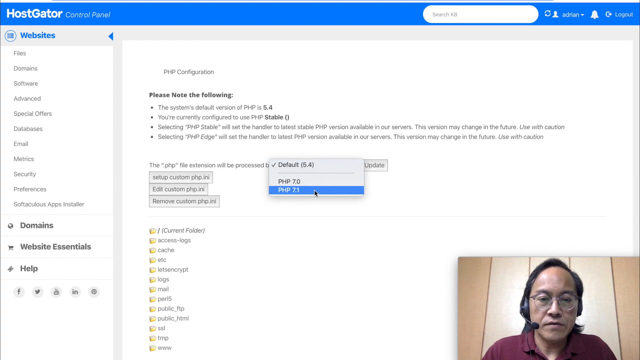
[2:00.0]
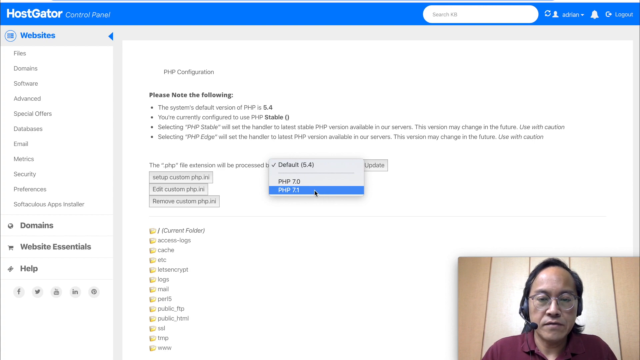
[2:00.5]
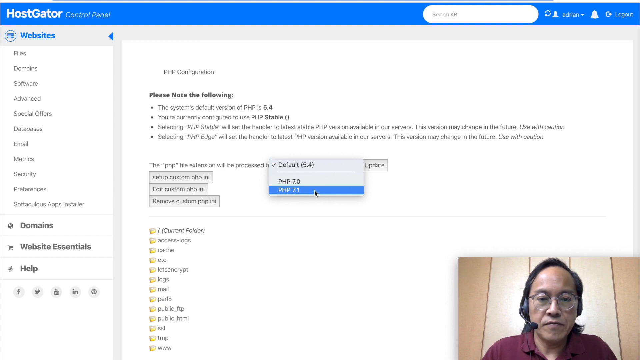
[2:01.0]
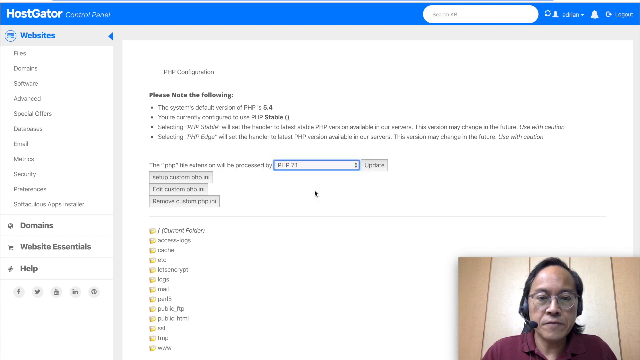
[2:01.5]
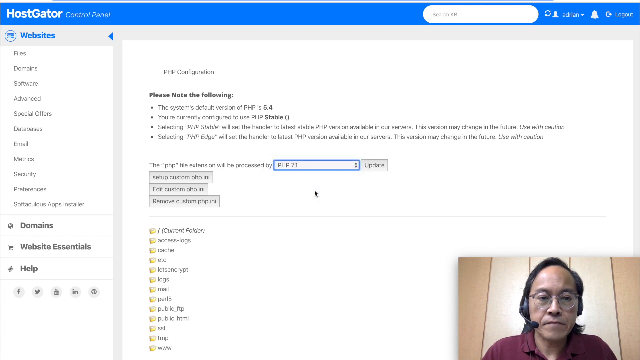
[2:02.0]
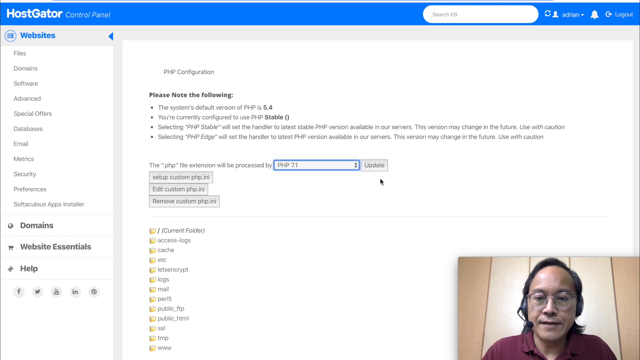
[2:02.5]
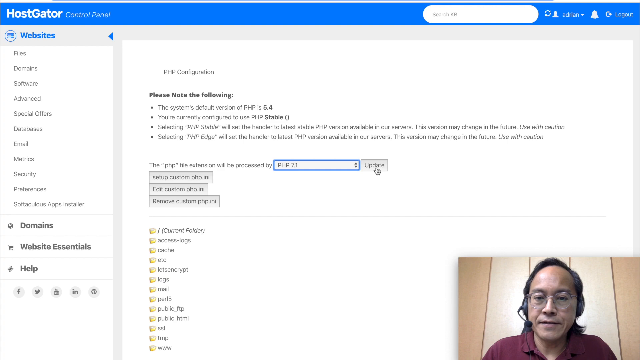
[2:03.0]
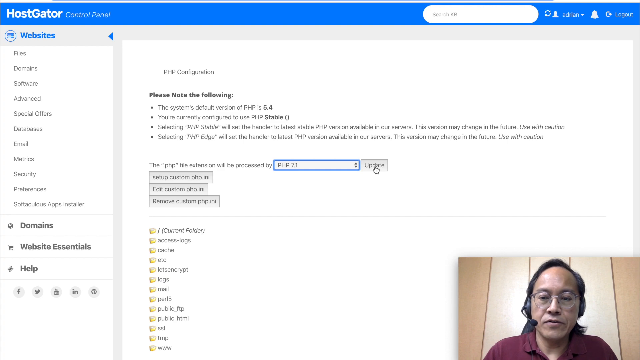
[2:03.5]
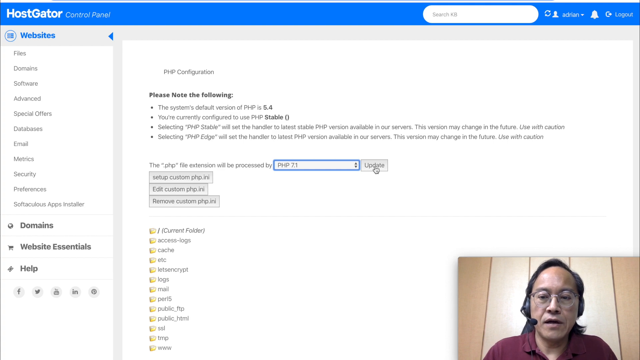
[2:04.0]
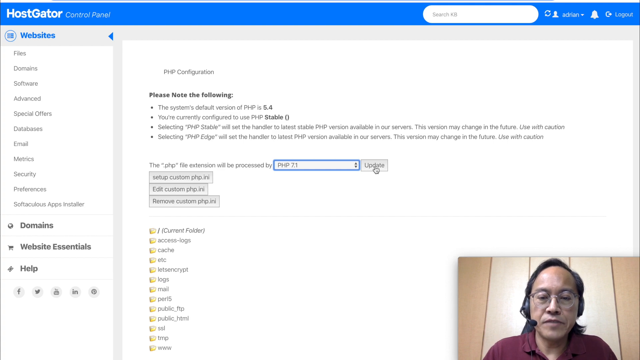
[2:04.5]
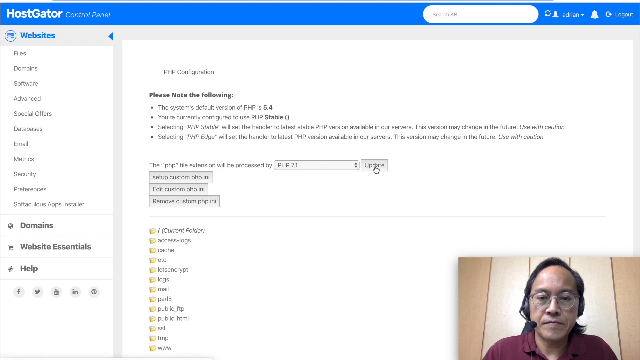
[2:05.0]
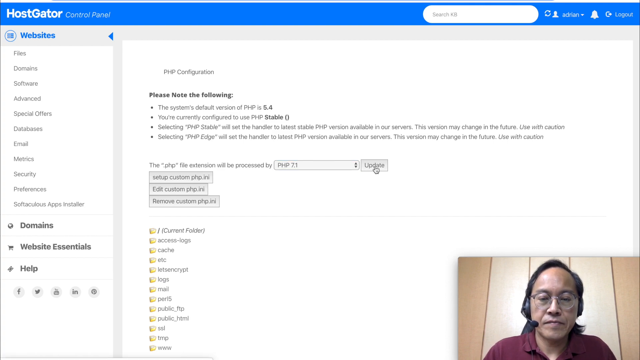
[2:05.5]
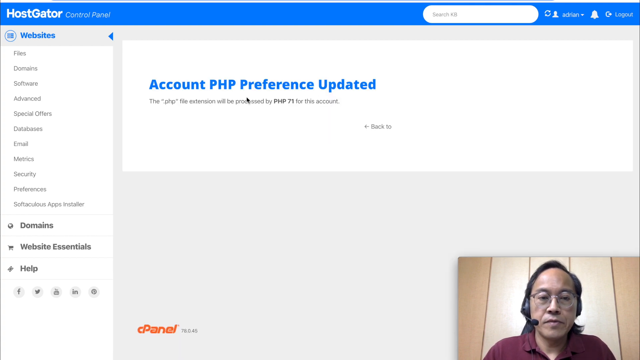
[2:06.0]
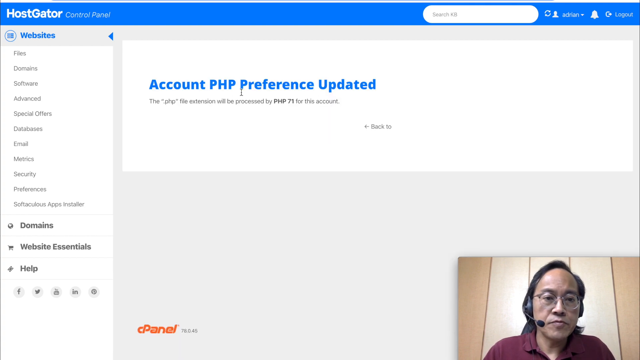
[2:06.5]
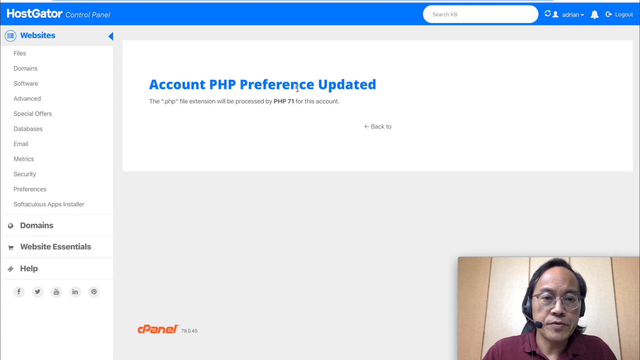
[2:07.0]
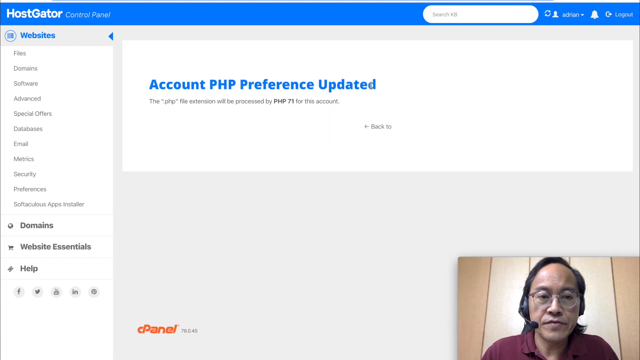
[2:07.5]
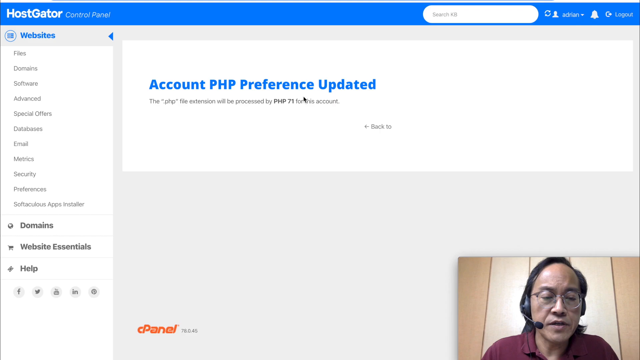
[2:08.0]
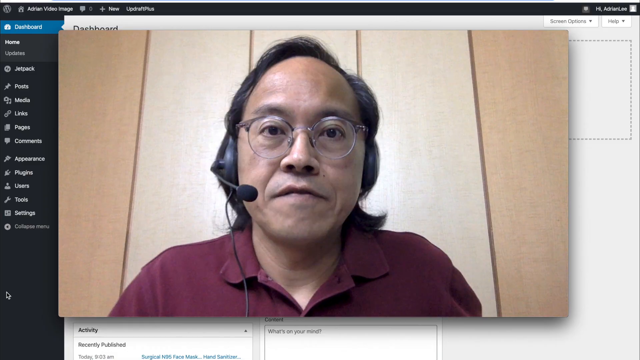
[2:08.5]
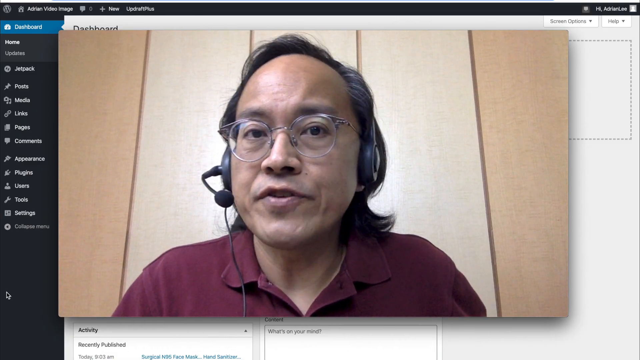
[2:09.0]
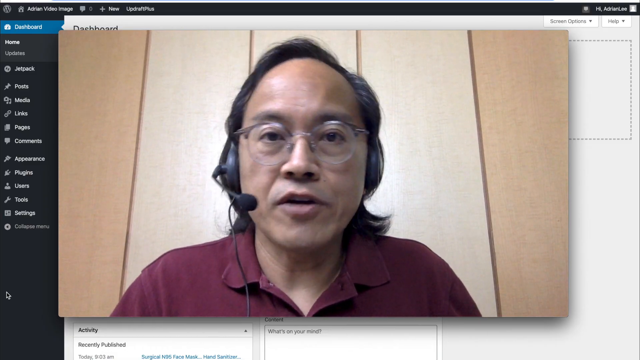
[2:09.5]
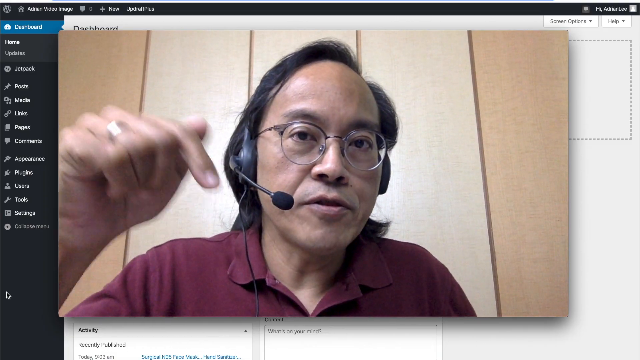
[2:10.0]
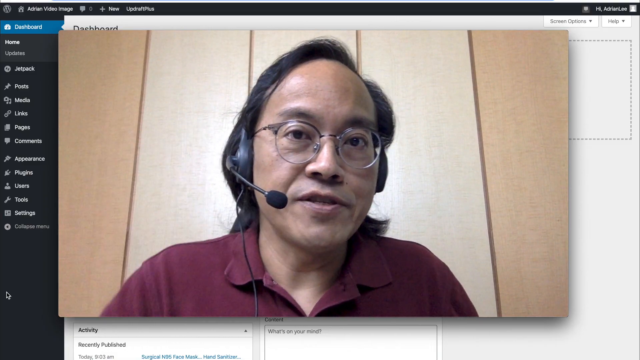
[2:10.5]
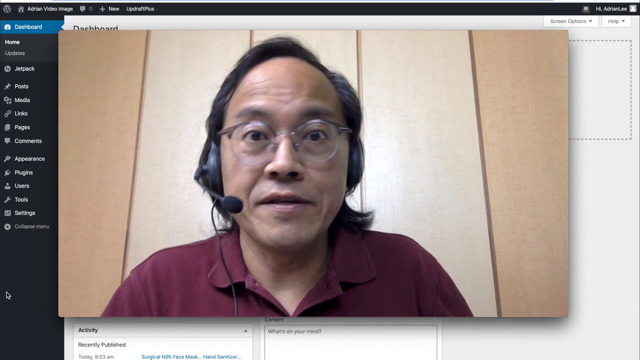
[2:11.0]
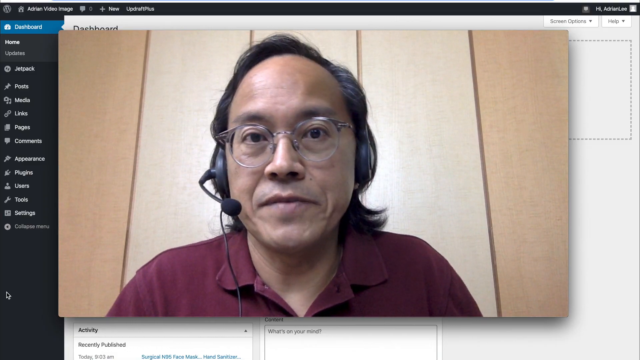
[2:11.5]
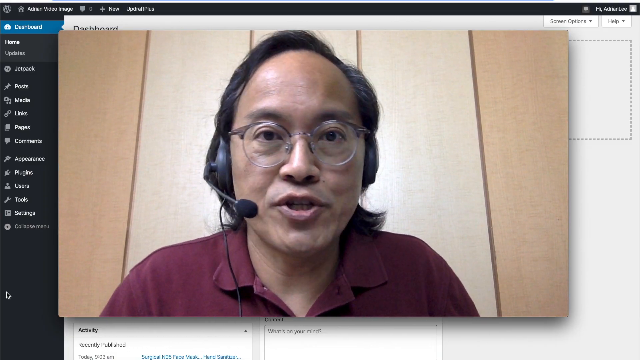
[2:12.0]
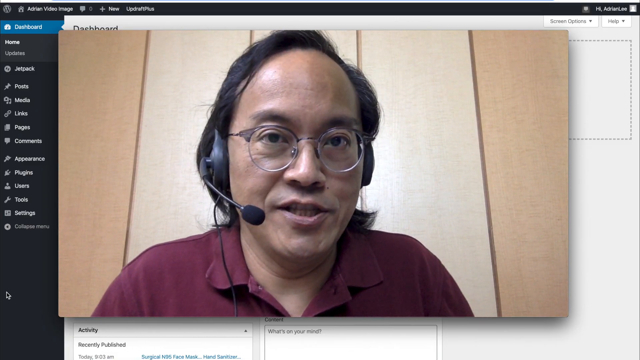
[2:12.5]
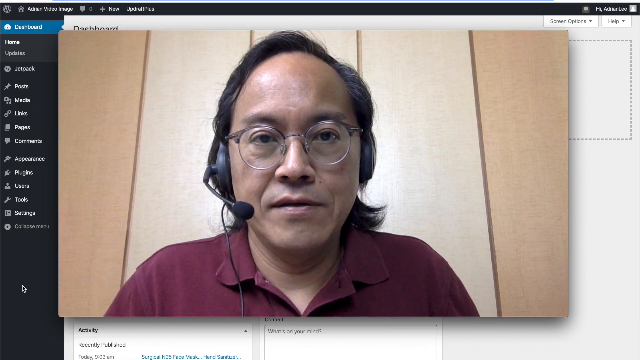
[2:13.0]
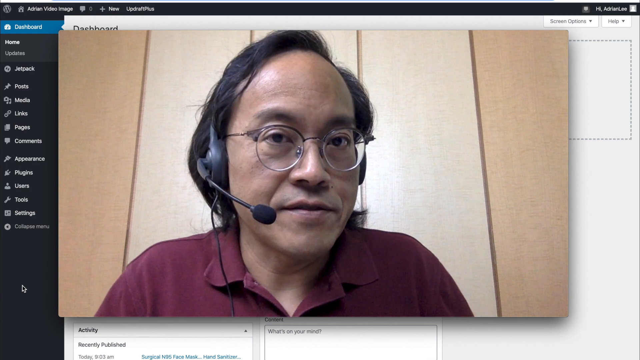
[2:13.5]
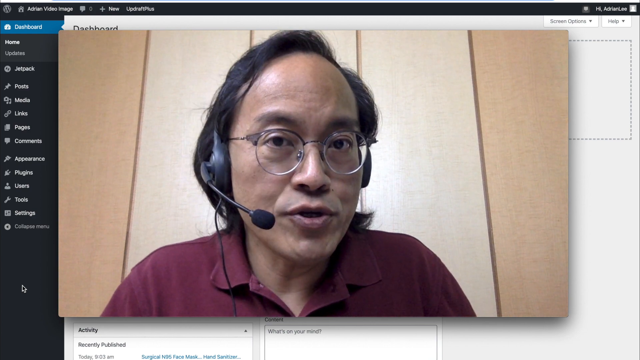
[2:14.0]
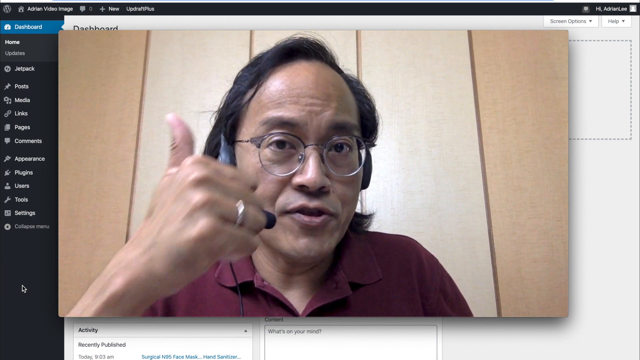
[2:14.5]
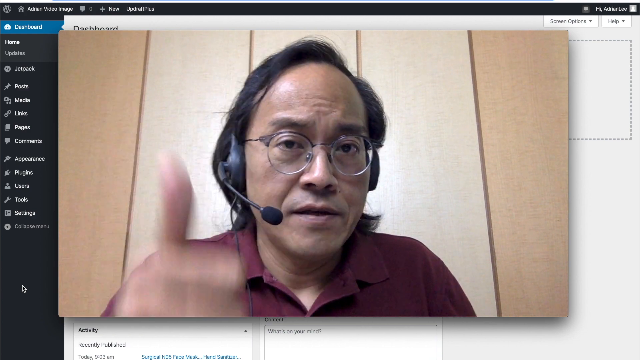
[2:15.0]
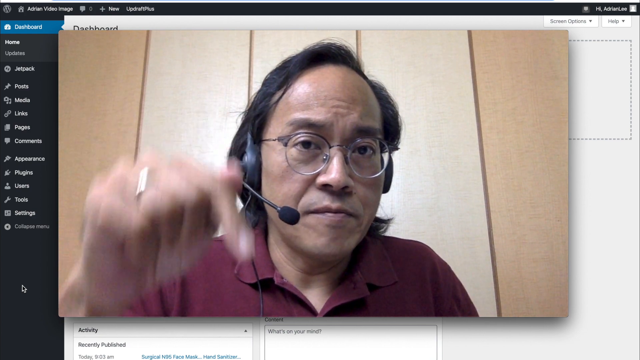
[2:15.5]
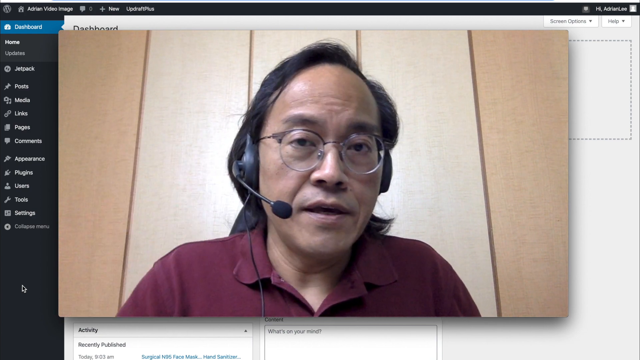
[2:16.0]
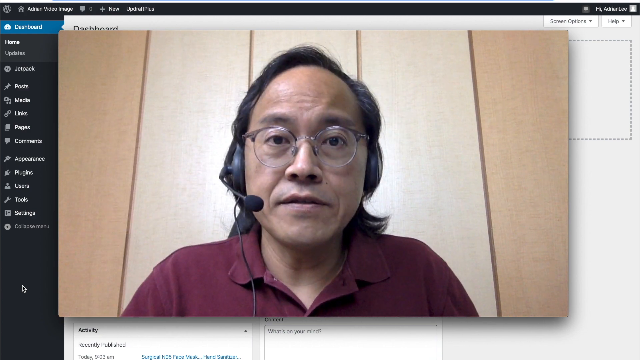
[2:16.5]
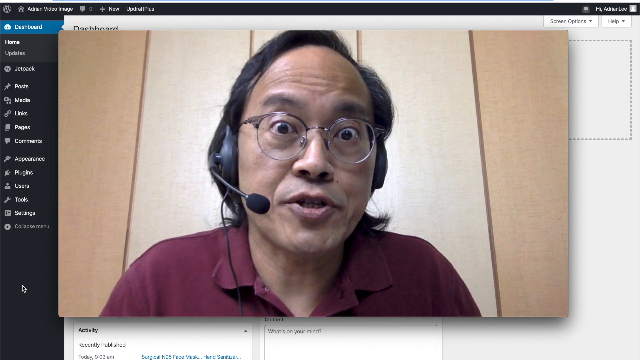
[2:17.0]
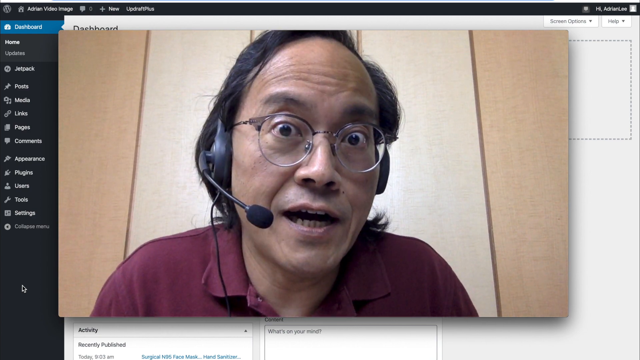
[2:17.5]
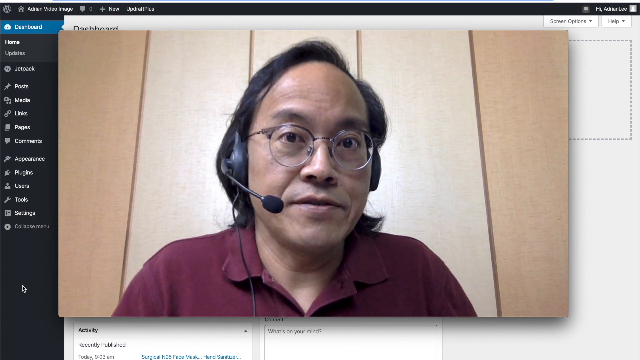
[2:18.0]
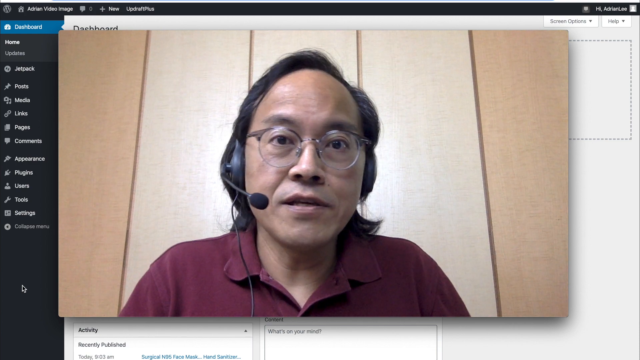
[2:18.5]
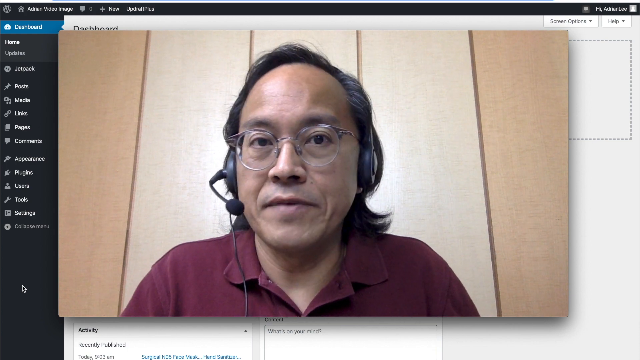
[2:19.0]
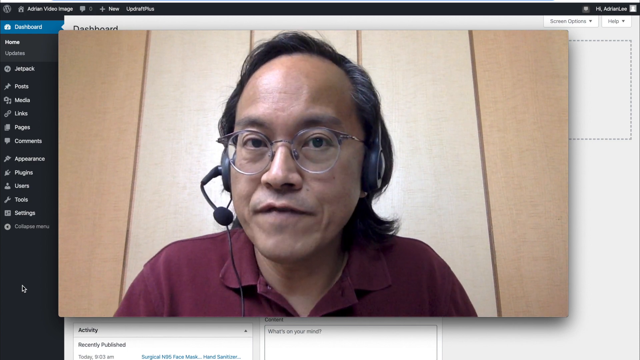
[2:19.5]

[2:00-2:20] A man is on the HostGator control panel site. He appears to be Asian and looks a little older, wearing a headset, glasses and a maroon or dark red shirt. On the PHP configuration page, he changes the PHP file extension to PHP 7.1 and hits the update button. The screen reads "account PHP preference updated" and "The PHP file extension will be processed by PHP 7.1 for this account." The video of him then fills the screen: he has a maroon shirt, glasses, somewhat long black hair, and a mic on his headset. He talks a lot with his hands, gives a thumbs up, and wears a wedding band.